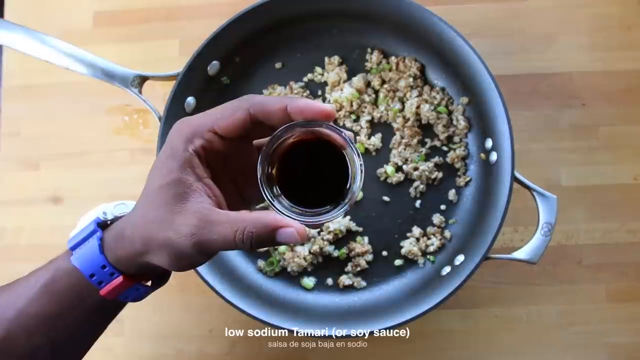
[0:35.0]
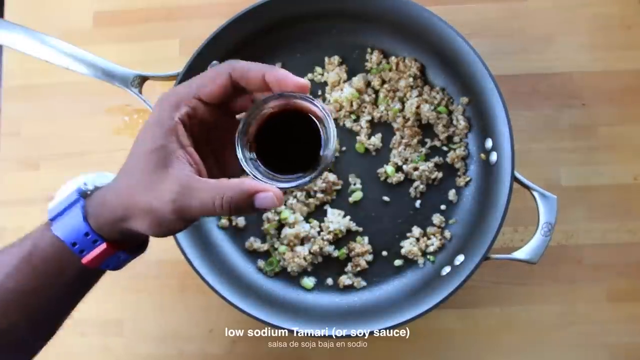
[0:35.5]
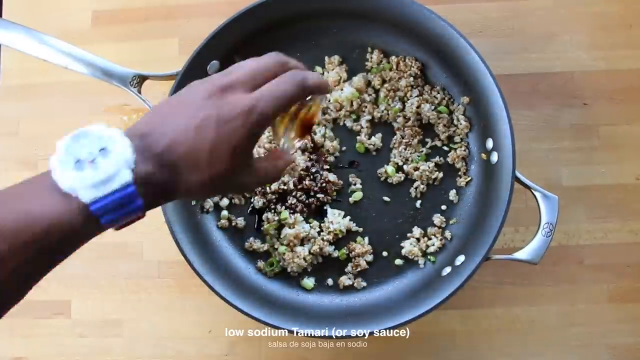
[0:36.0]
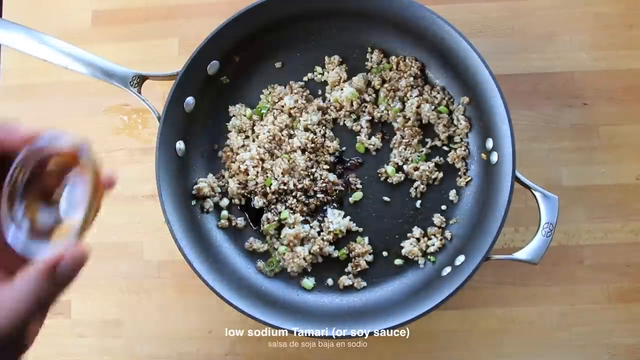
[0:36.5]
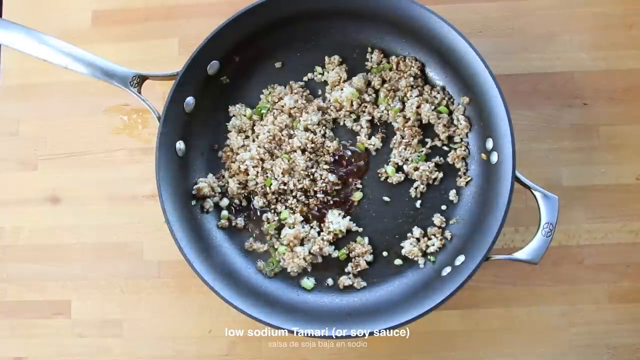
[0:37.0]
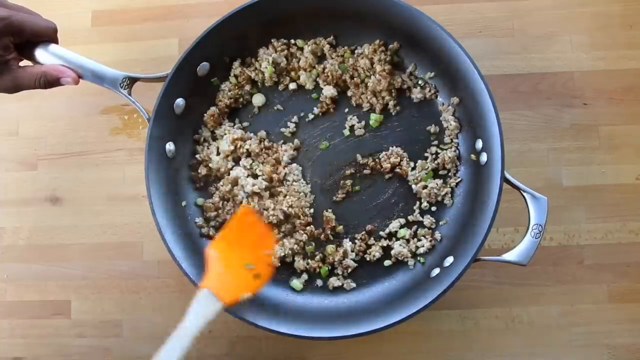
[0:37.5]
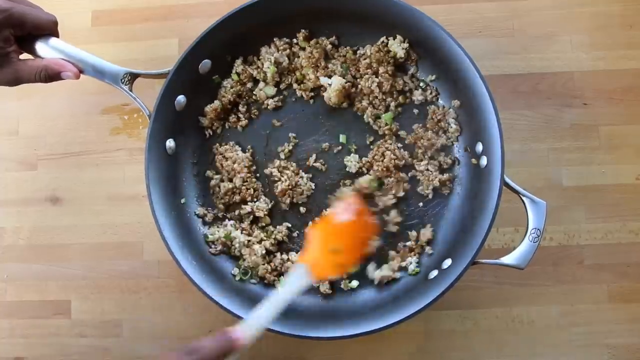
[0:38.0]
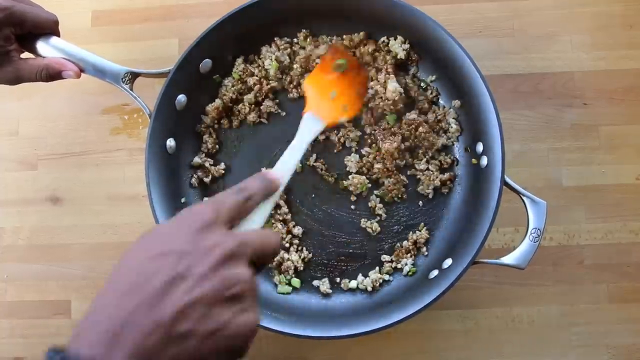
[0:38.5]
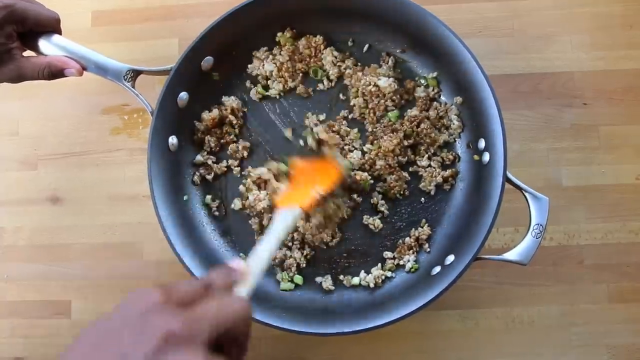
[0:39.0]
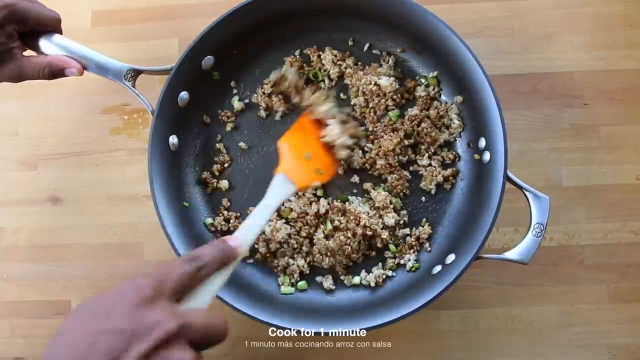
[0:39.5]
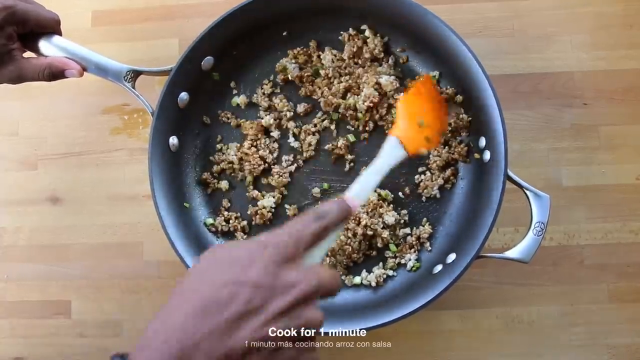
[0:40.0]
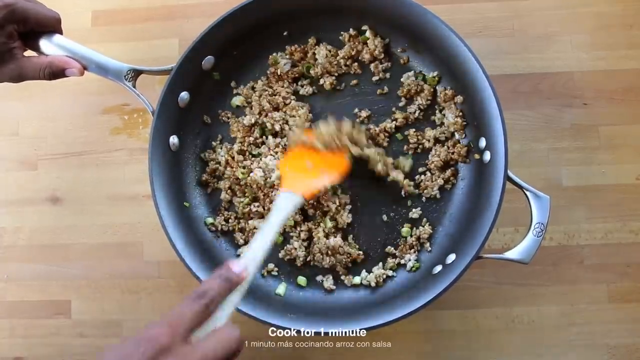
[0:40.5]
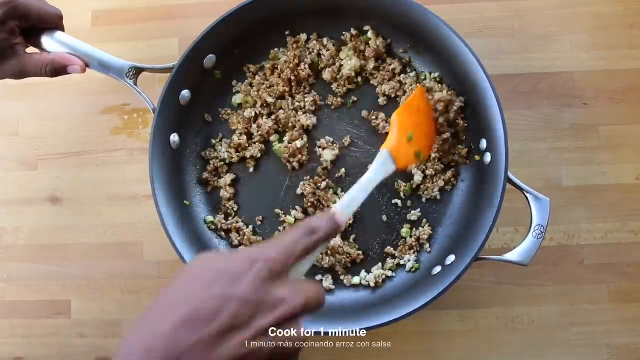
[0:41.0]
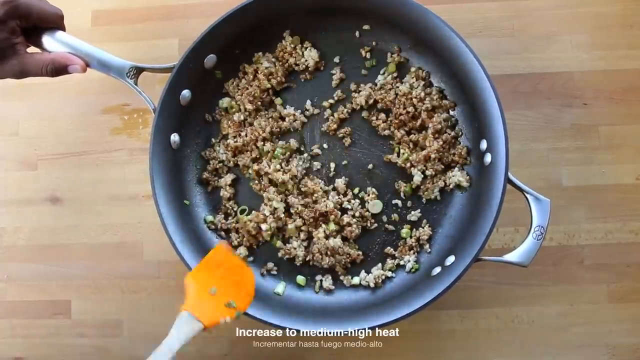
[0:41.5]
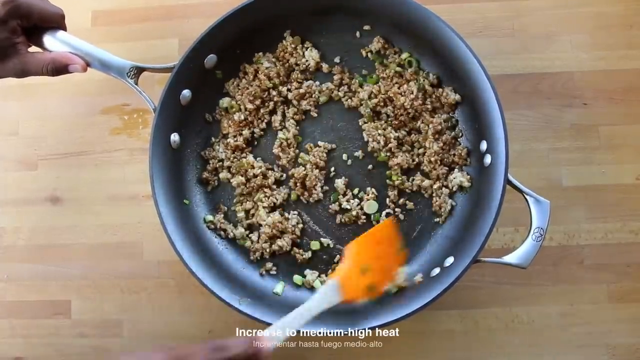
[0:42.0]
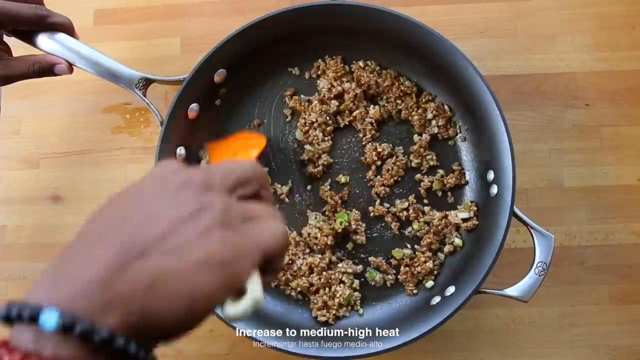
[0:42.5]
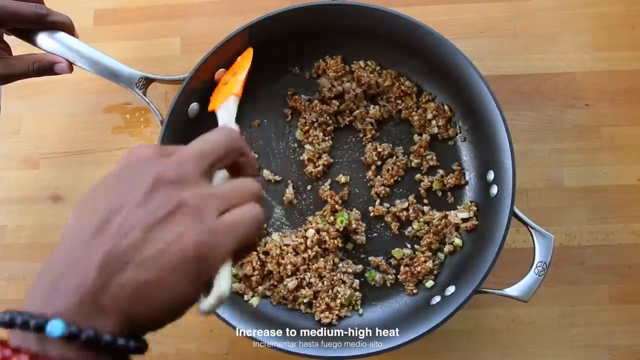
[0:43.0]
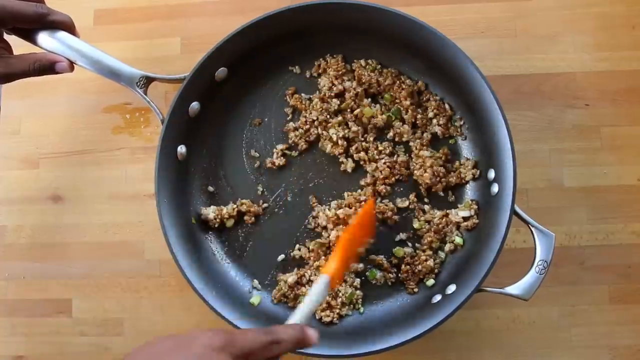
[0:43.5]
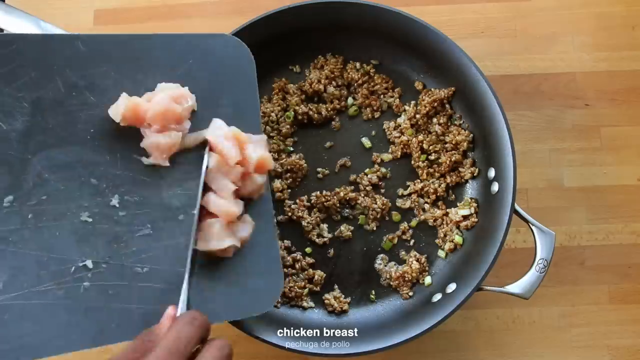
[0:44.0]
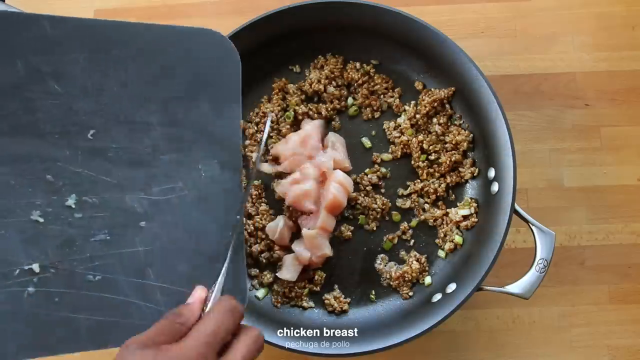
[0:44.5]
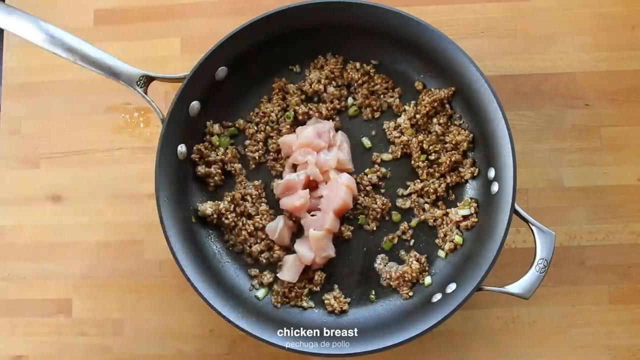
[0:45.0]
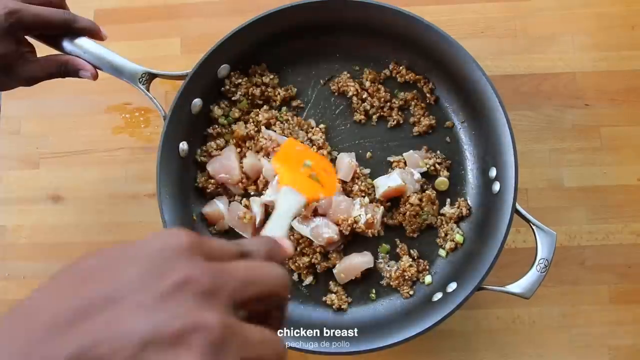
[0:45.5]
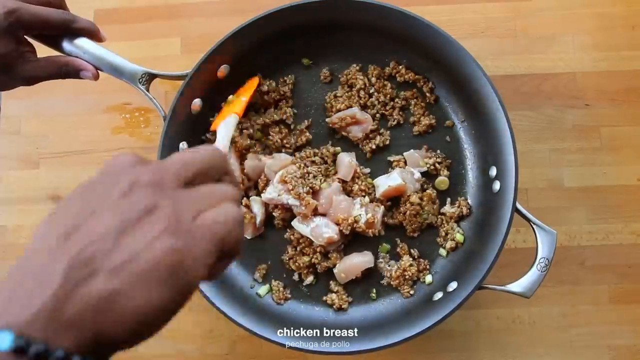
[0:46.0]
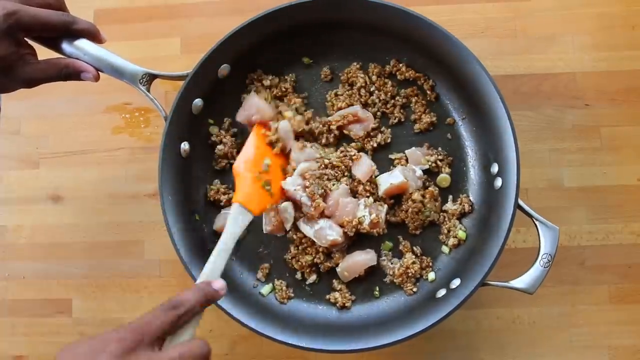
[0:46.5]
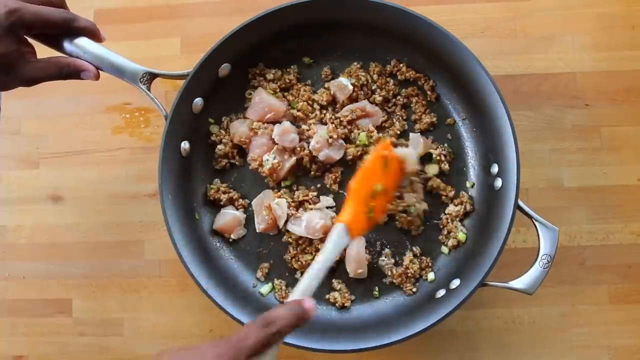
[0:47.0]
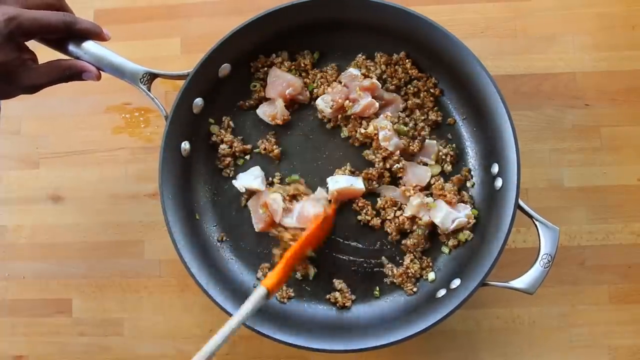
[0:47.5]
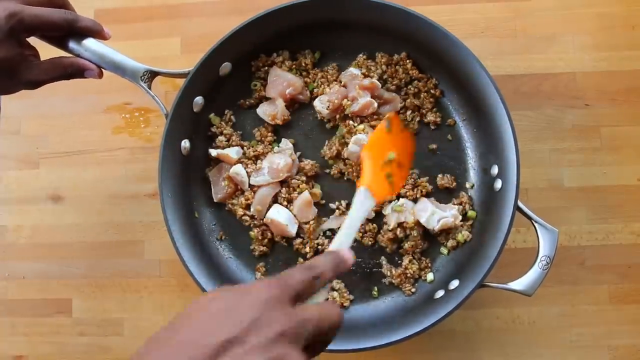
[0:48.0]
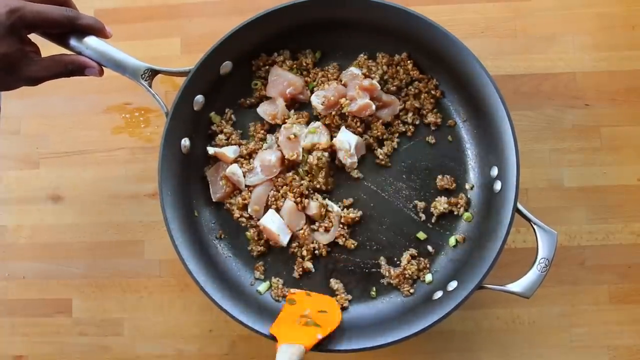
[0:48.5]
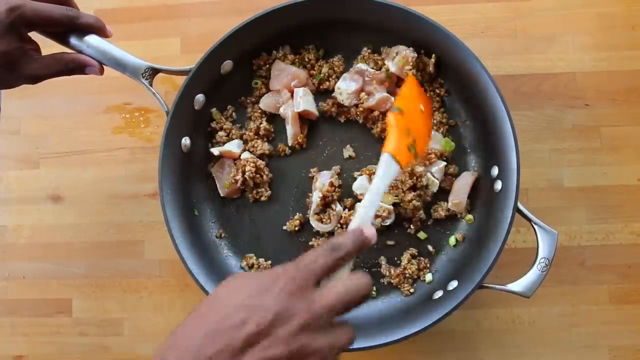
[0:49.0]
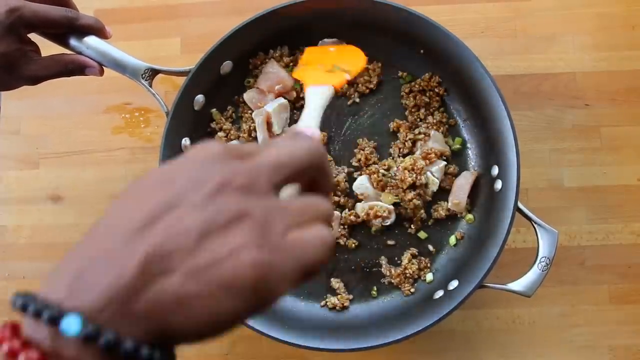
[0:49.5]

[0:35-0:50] The cook's hand comes into the frame; he has darker skin and wears a prominent blue and red wristwatch. He holds glass containers of ingredients, and as each comes on screen a subtitle at the bottom names the item and gives any special cooking instruction. First he adds a brown sauce from a glass container, with text reading "low sodium" and "or soy sauce", and kind of mixes it in. The text says "cook for one minute" and instructs to increase the heat from medium to high. He then grabs a cutting board and slides pre-diced pieces of chicken into the pan, stirring them in with the soy sauce, rice, garlic and green onion already in it.